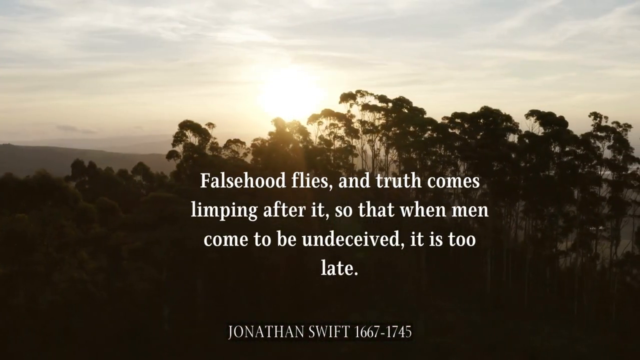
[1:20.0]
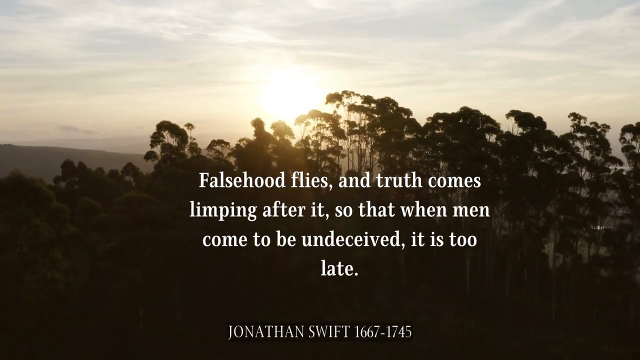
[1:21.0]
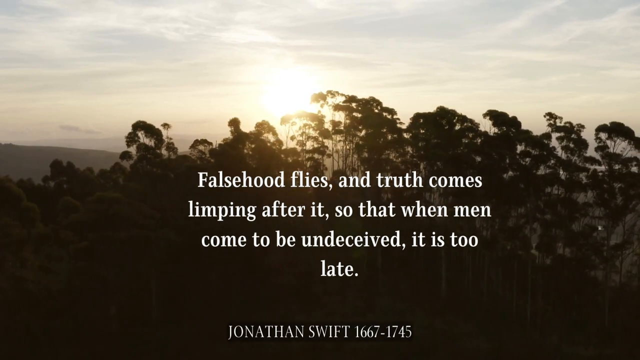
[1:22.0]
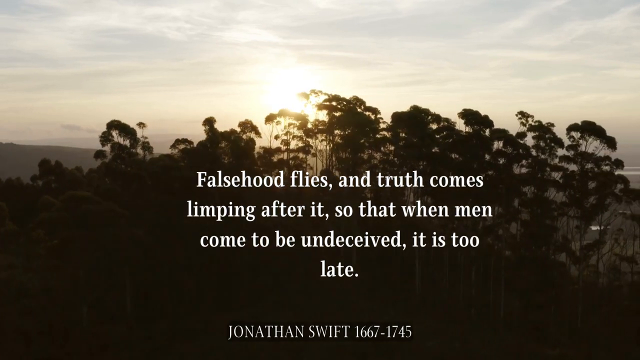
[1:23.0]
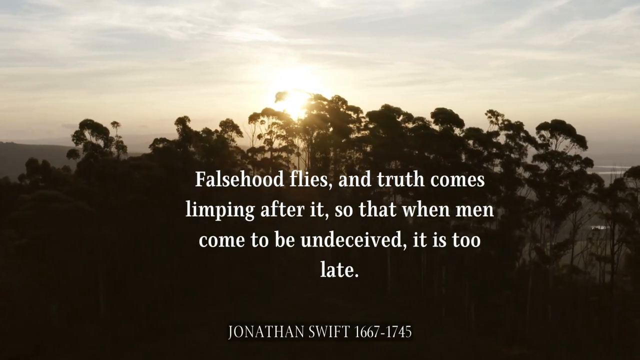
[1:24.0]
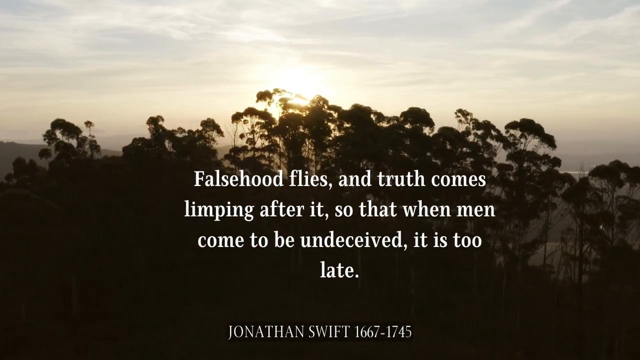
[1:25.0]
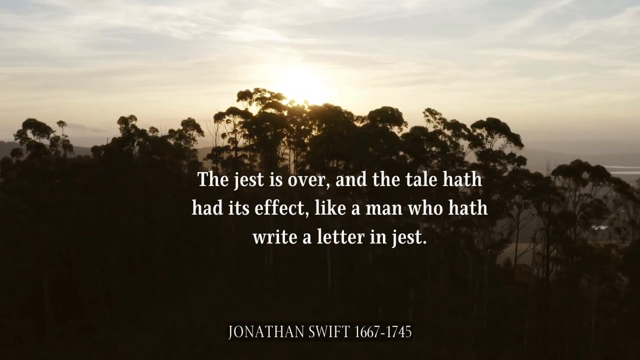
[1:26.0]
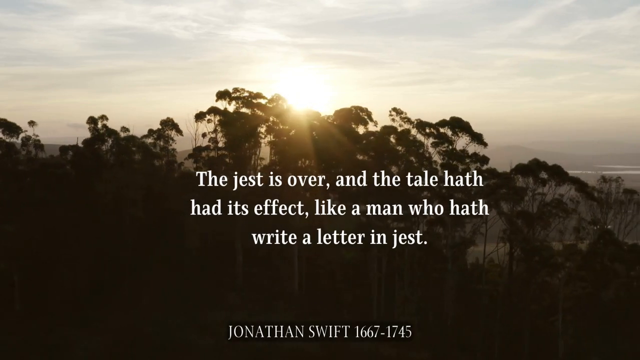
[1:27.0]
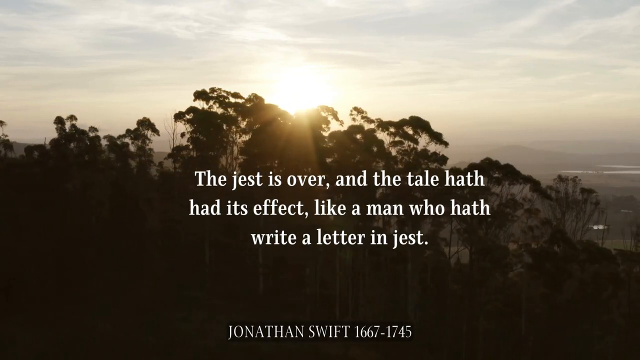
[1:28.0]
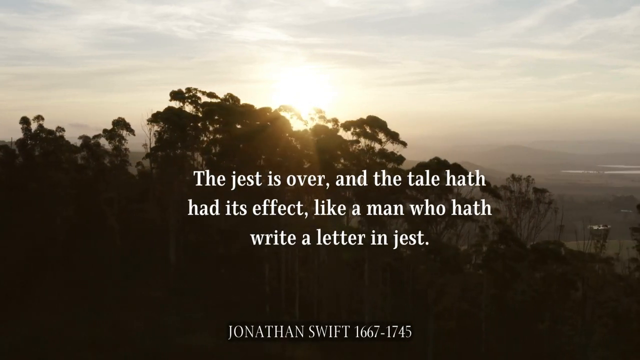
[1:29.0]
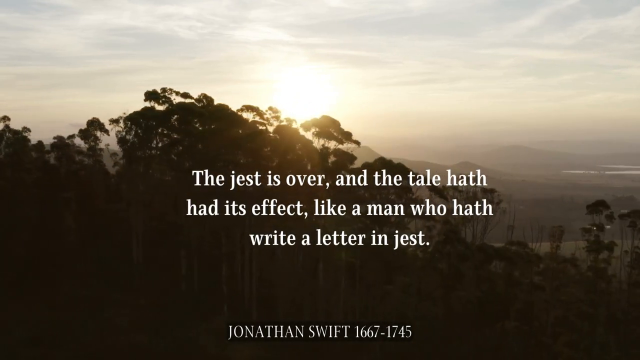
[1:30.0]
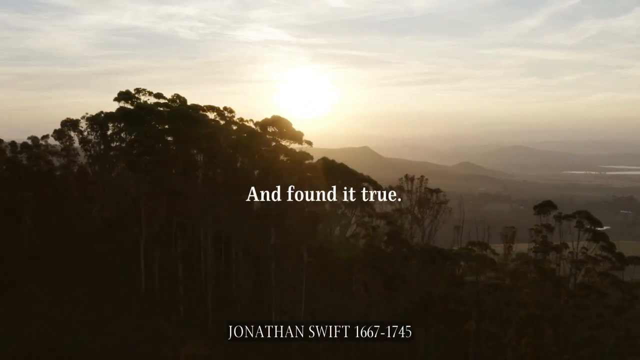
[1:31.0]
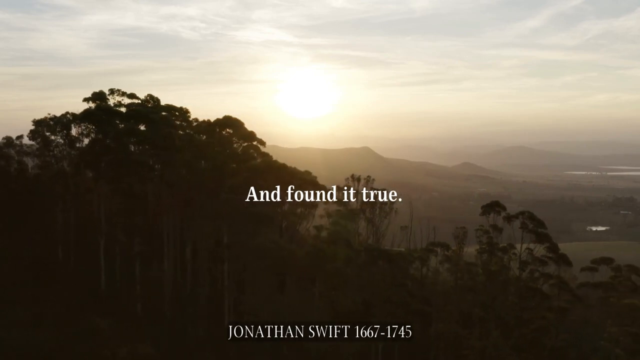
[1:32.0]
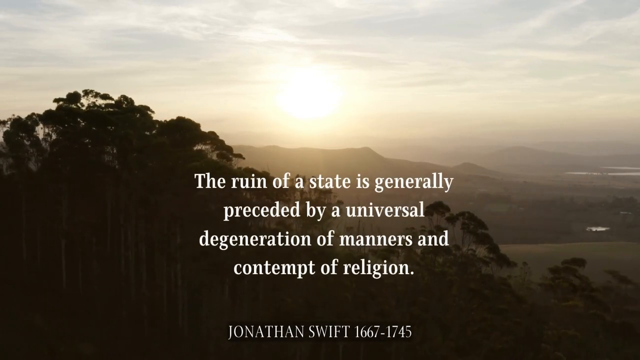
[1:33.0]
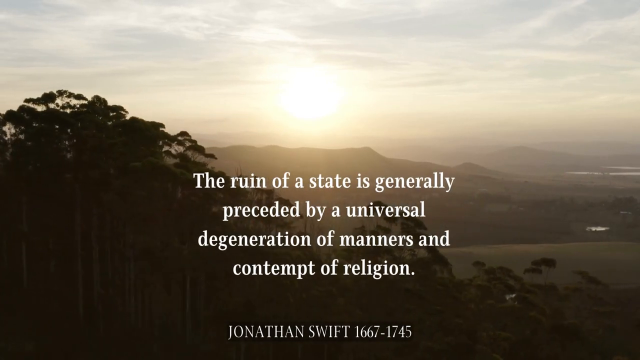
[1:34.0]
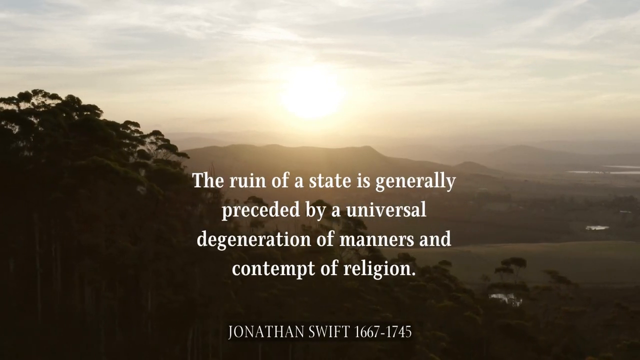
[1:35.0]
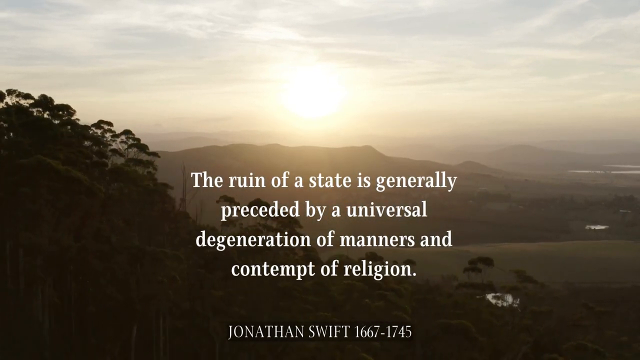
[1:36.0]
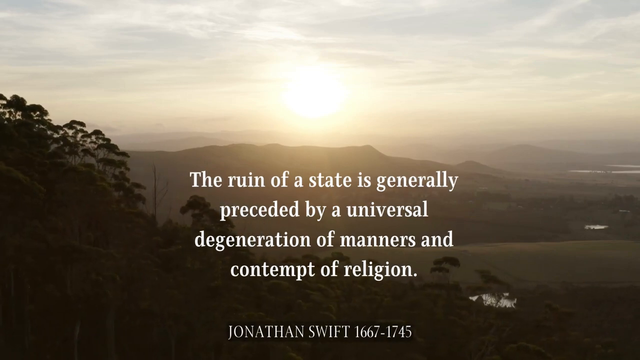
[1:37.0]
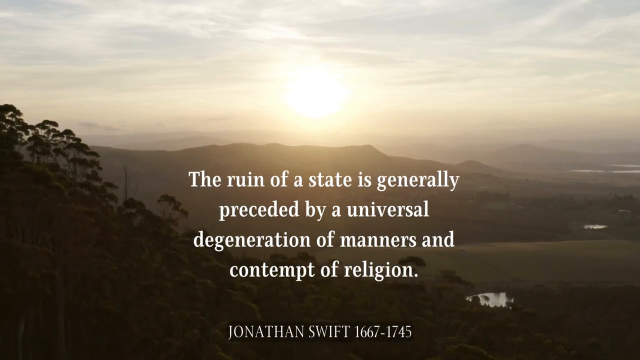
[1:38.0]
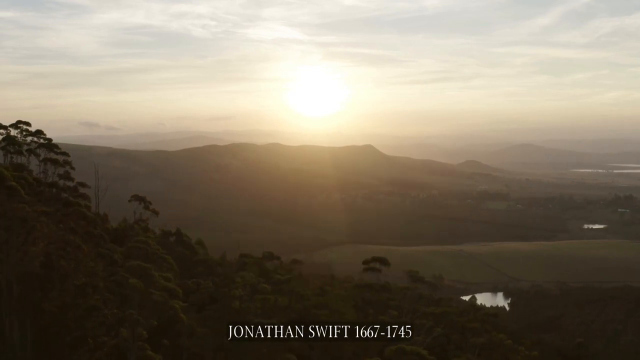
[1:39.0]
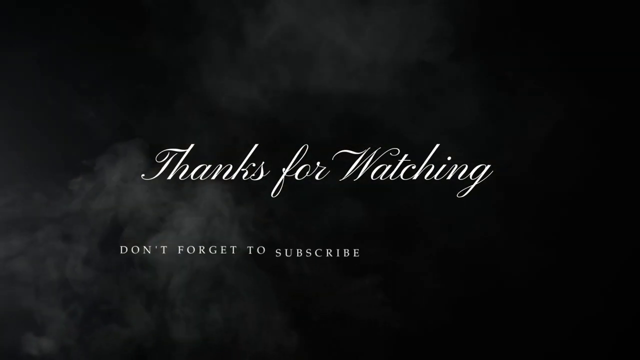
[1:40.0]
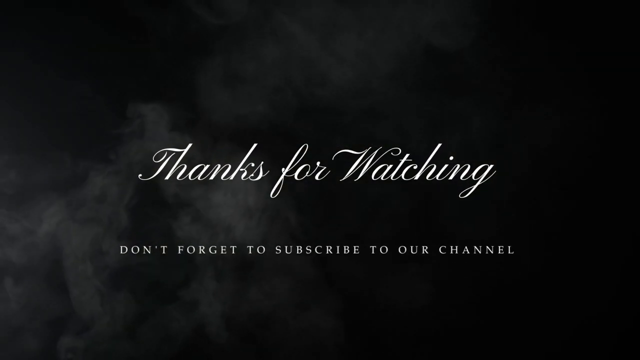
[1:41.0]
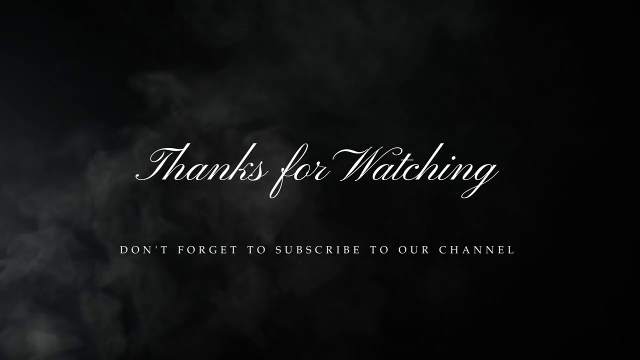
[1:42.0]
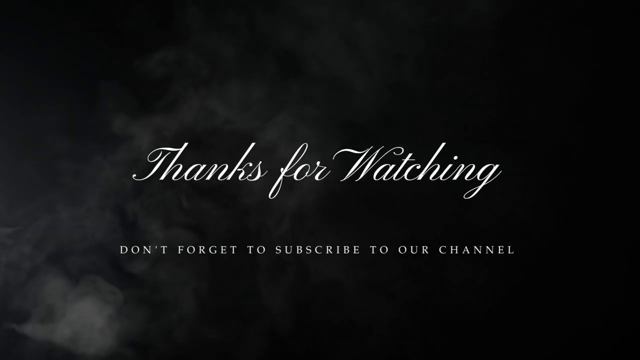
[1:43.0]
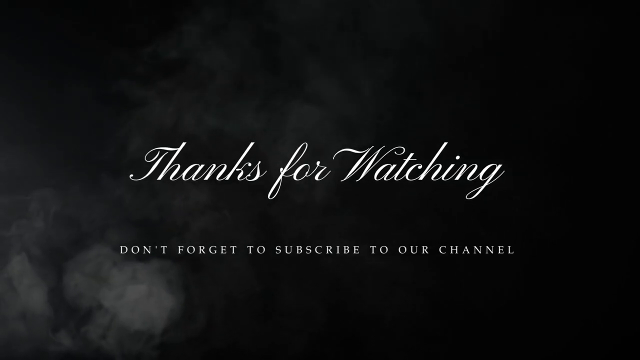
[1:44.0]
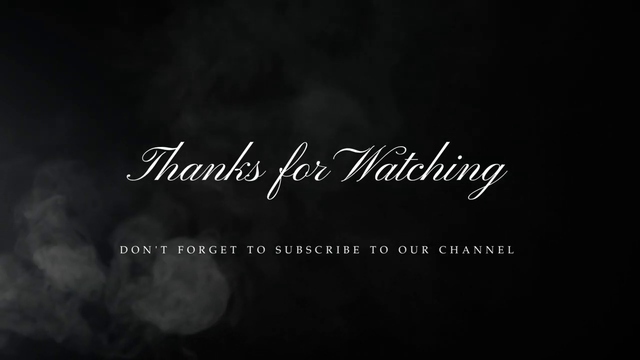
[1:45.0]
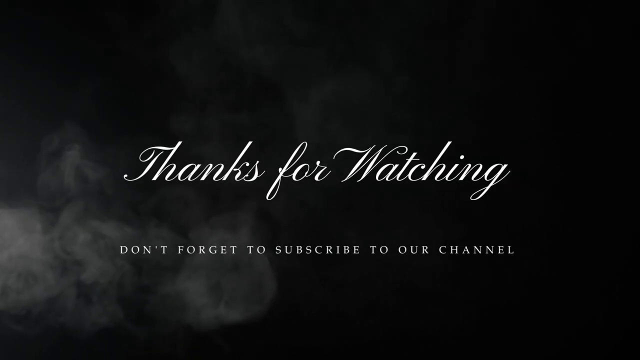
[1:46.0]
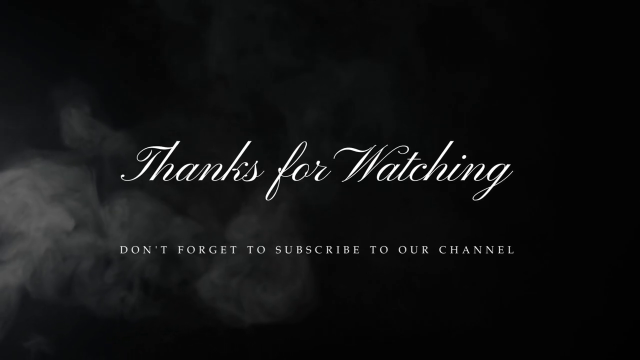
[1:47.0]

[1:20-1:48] Tall trees with most of the leaves up near the top, with the sun behind them; it looks to be evening right before sunset, with some clouds. White text in the center reads "falsehood flies and truth comes limping after it so that when men come to be undeceived it is too late," with "Jonathan Swift 1667 to 1745" at the bottom. The camera pans parallel to the trees, then the text disappears and a new block reads "the jest is over and the tale hath had its effect like a man who hath write a letter in jest." The camera continues to pan and the sun shines through the trees. The text disappears and a new box reads "and found it true," followed by "the ruin of a state is generally preceded by a universal degeneration of manners and contempt of religion." The camera continues to pan until the sun is no longer behind the trees, and small hills and fields are visible in the distance.